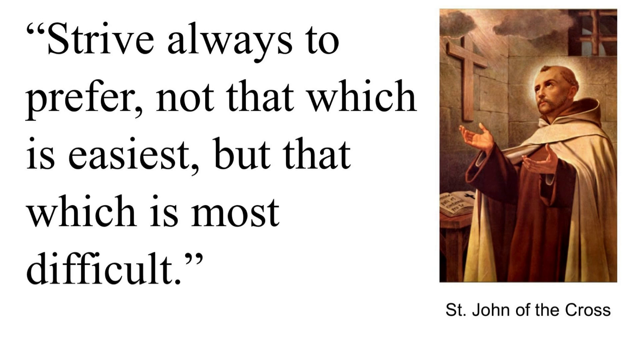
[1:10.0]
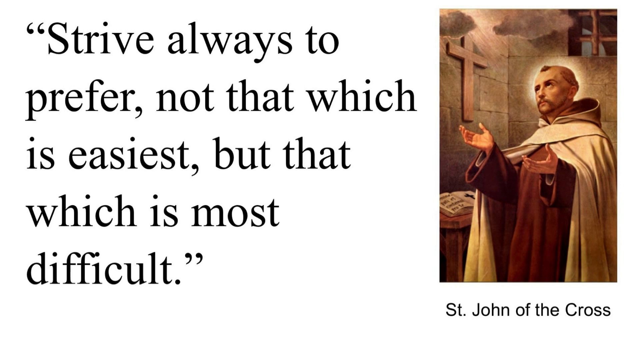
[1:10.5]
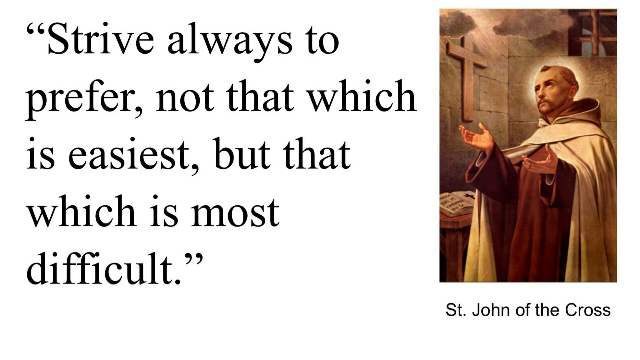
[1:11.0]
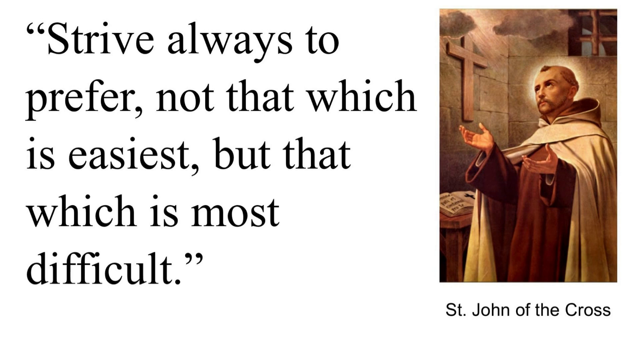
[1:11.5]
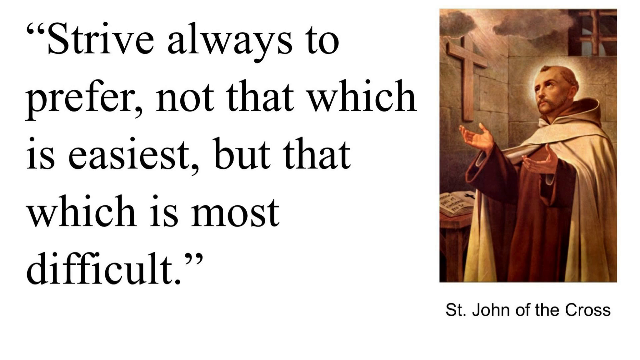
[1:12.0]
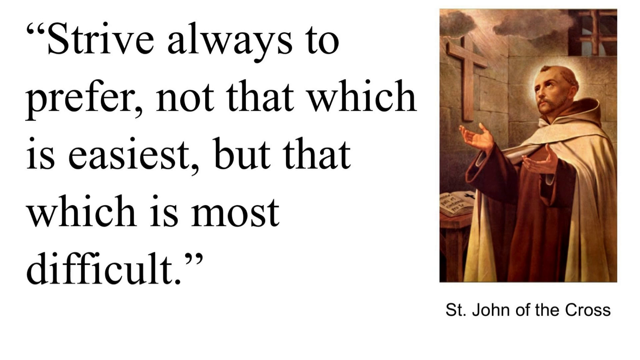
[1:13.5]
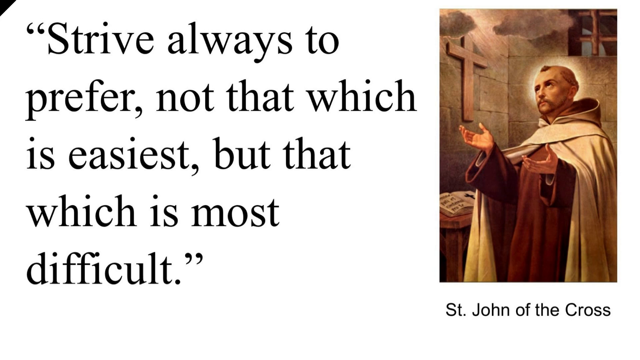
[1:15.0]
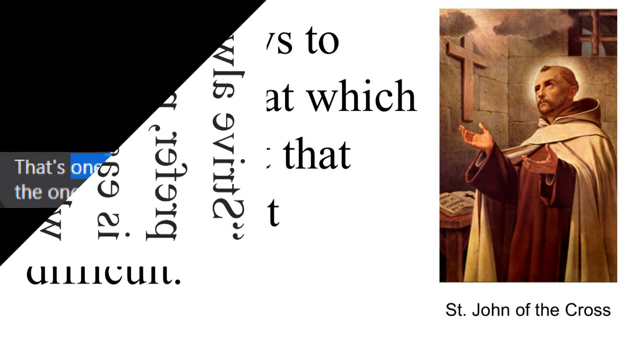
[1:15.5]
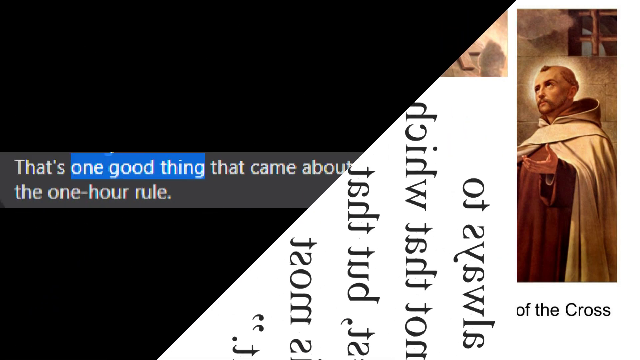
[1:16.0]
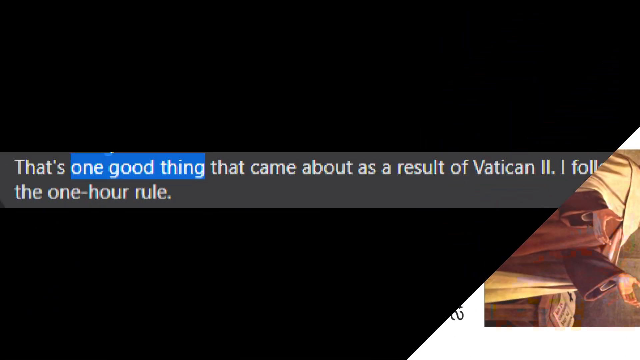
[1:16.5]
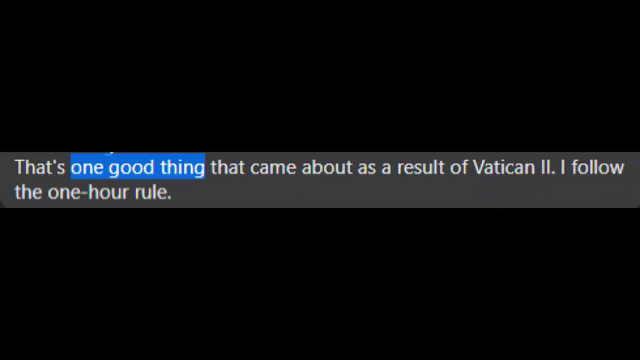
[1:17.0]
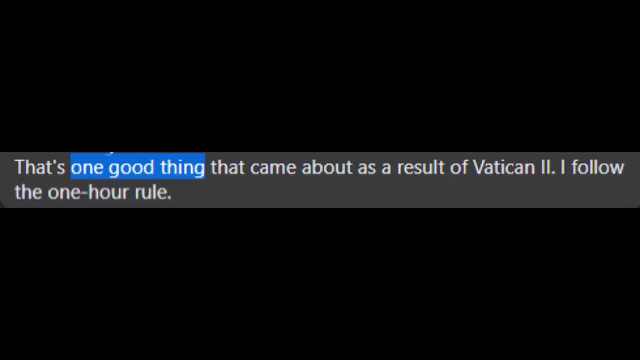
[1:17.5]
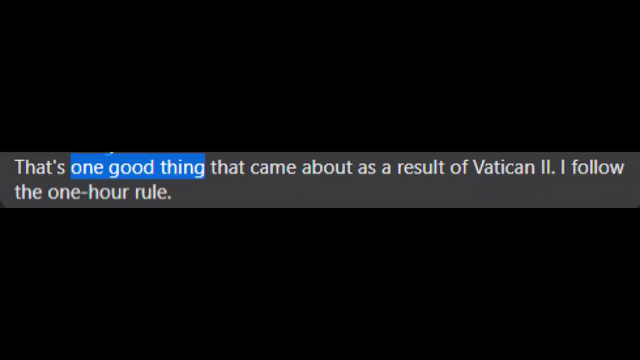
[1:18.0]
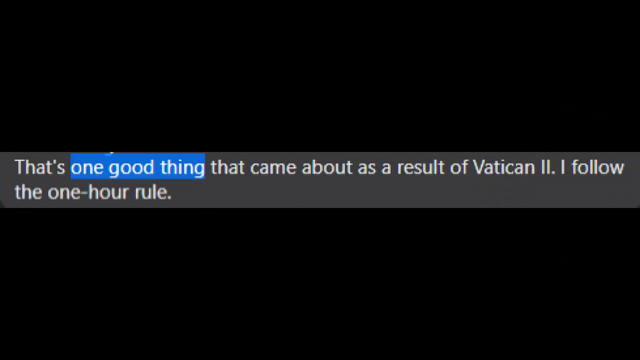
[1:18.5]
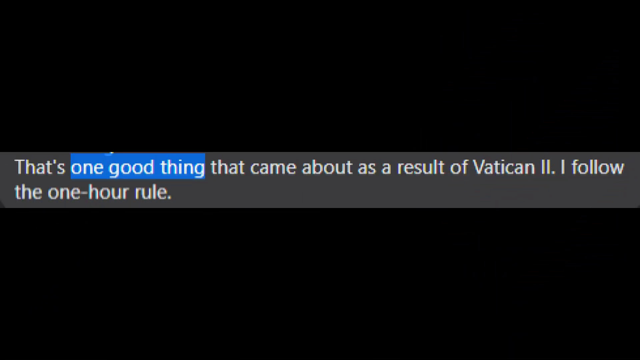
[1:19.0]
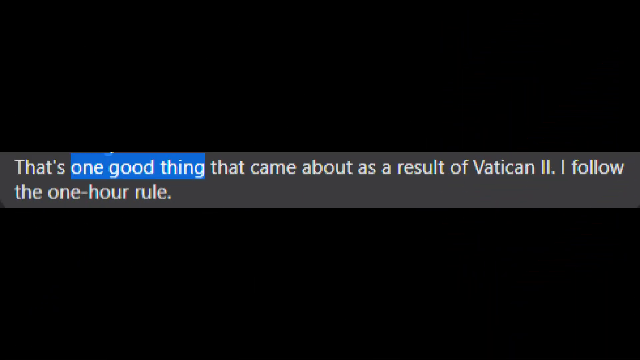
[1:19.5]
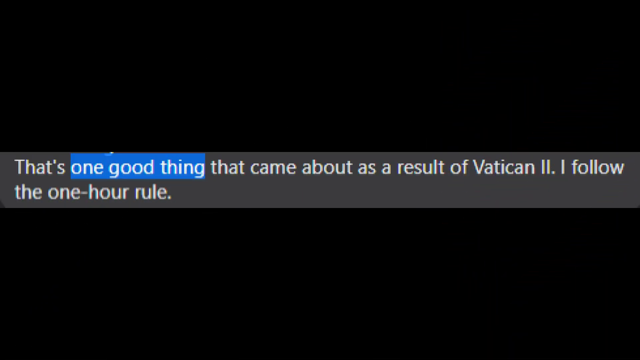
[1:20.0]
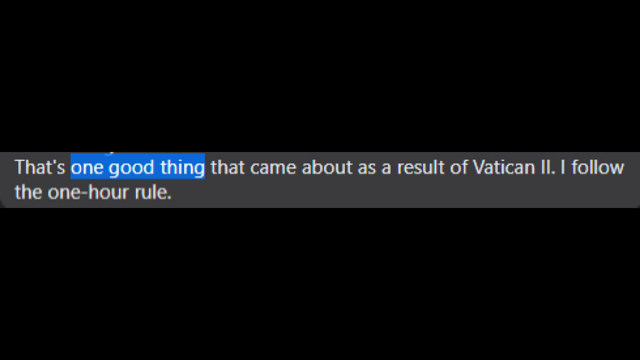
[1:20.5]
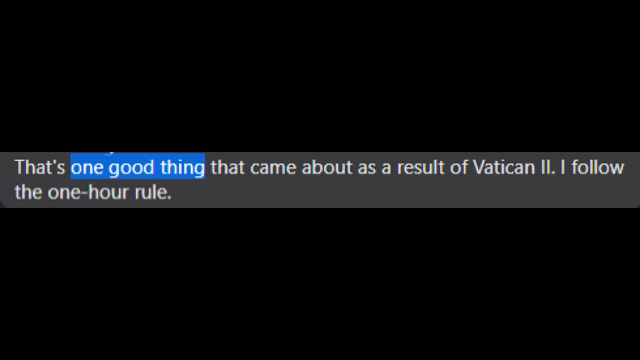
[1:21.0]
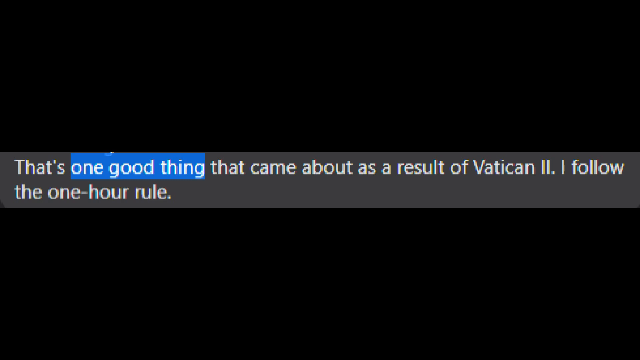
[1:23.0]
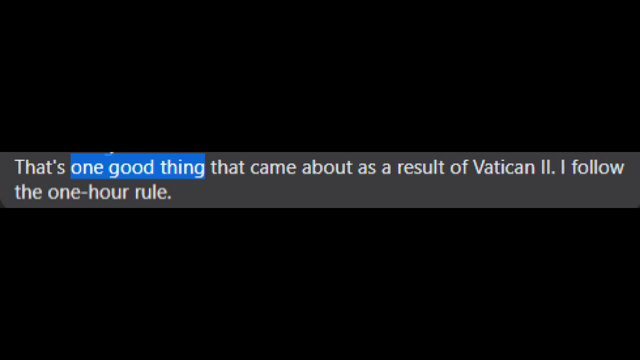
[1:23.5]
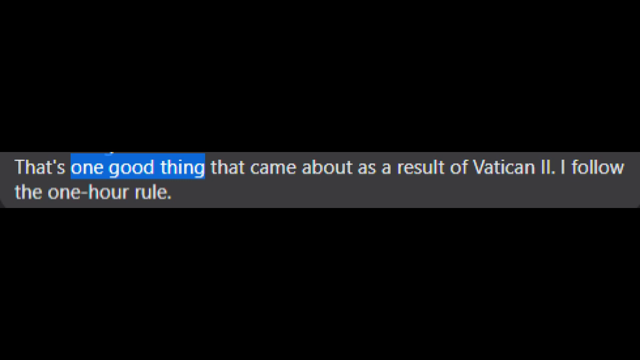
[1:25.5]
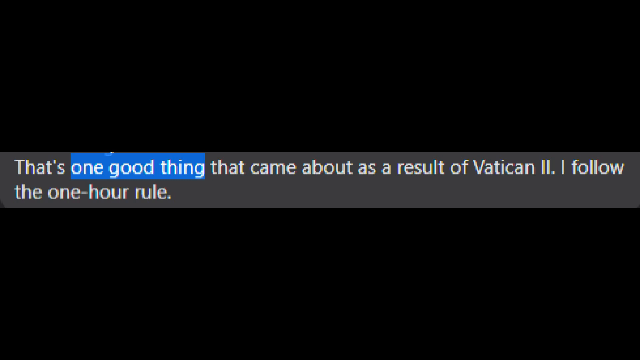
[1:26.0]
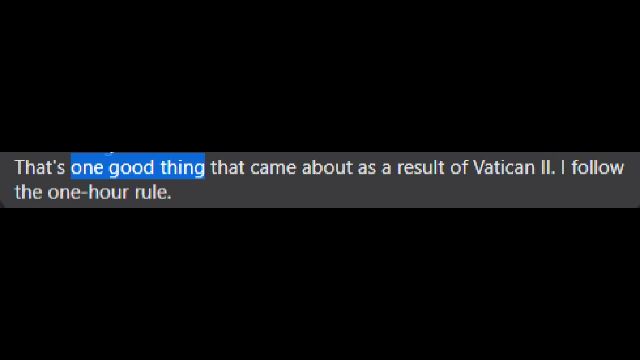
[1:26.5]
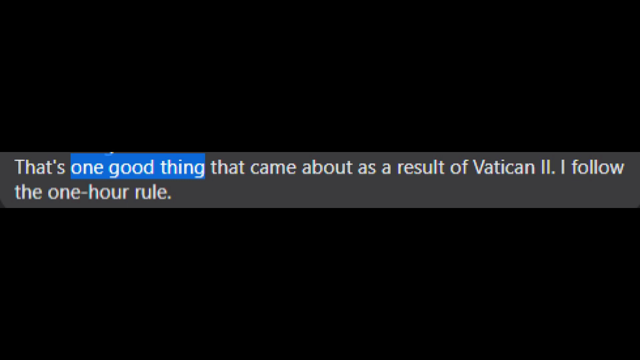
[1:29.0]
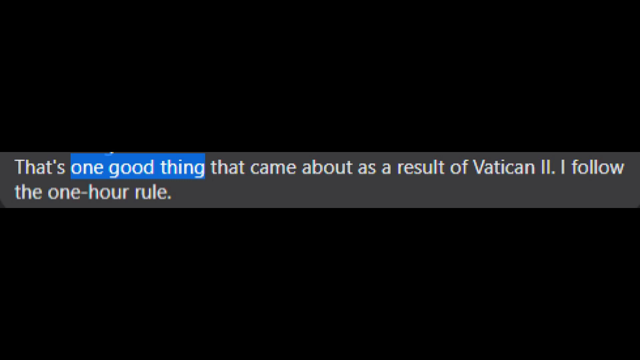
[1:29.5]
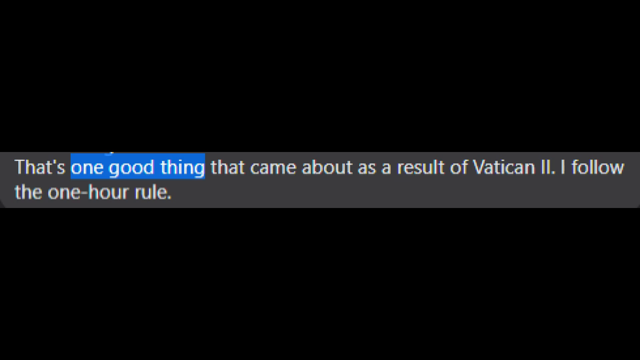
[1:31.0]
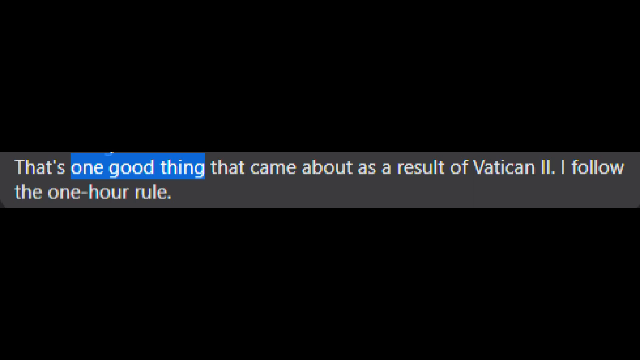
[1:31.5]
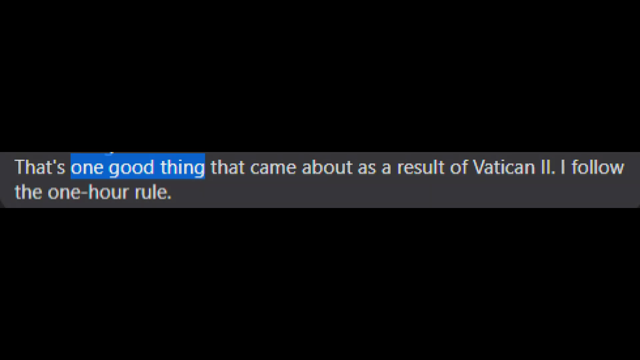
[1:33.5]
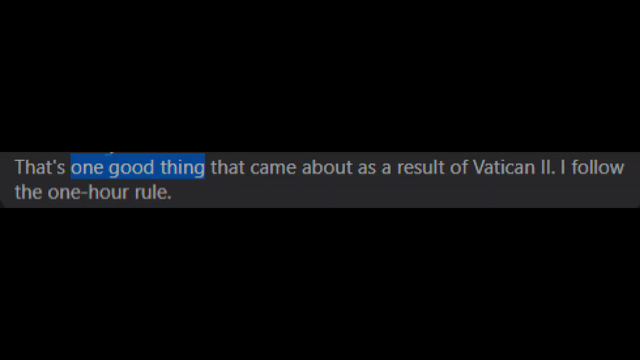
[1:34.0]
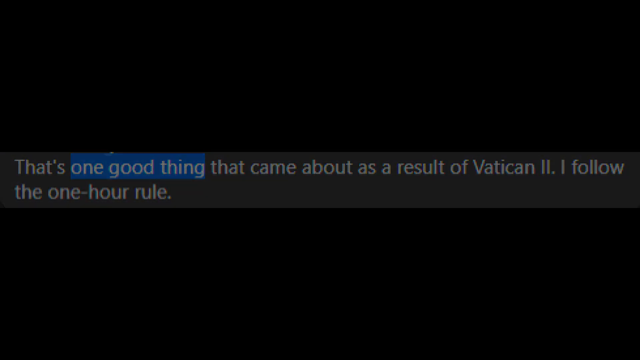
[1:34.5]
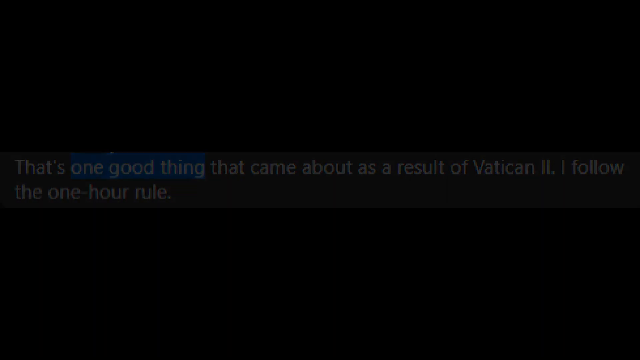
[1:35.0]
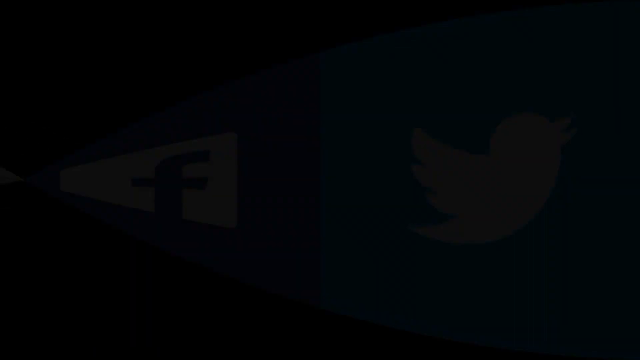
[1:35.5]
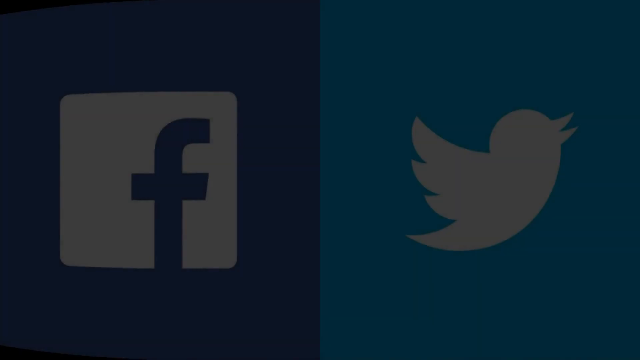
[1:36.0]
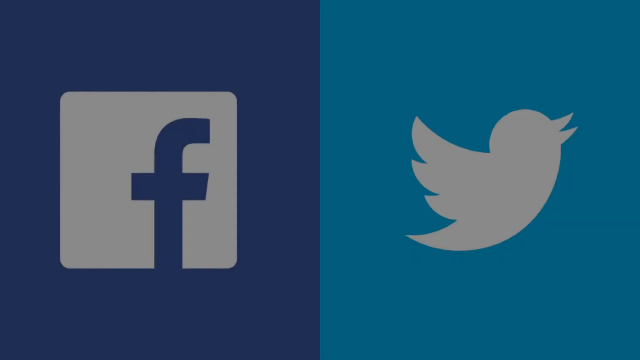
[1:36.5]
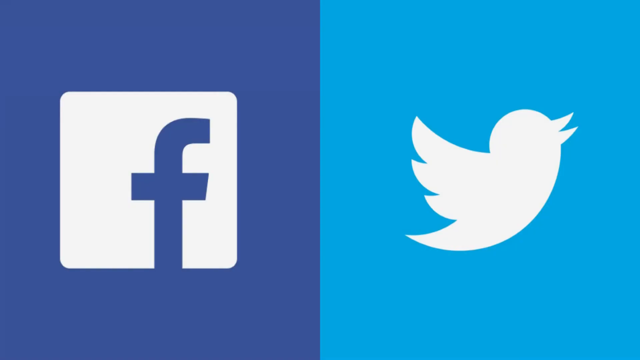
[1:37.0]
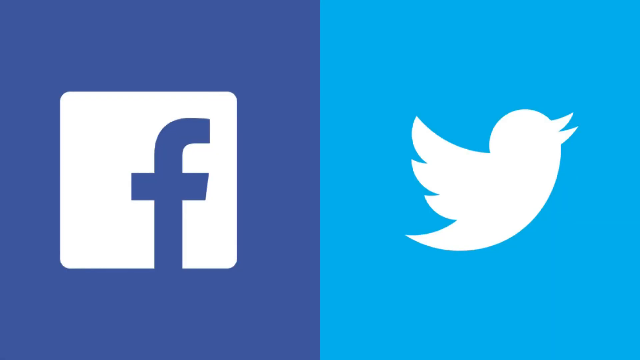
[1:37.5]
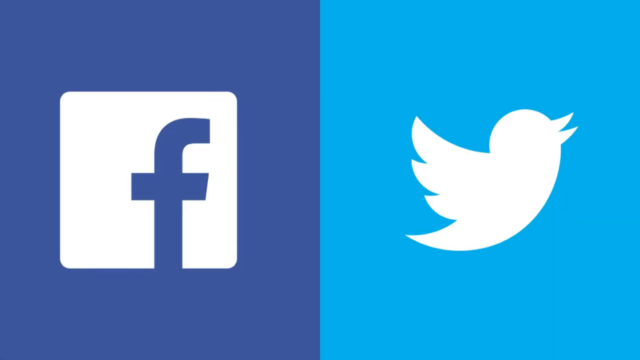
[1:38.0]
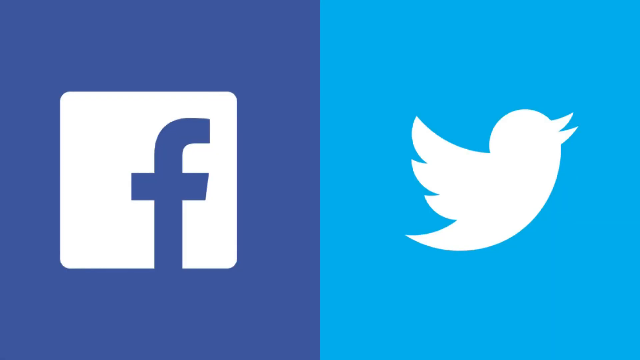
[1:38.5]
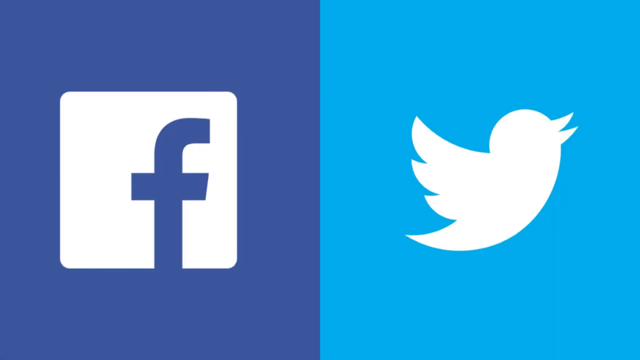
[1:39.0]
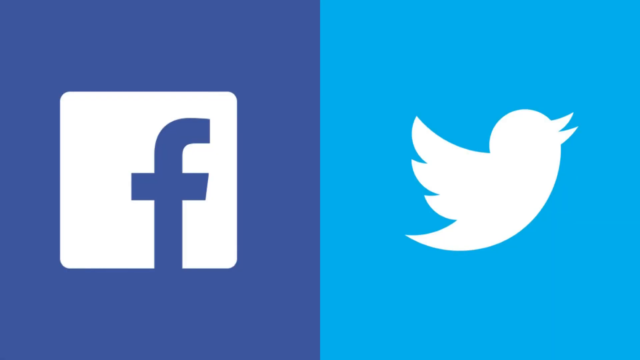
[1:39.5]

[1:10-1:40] A cartoonish image shows a man in a brown robe with another robe with a hood over it, and light shining down on his face. A caption includes the words "who prefer not that which is easiest but which is most difficult" and stays on screen. Other text then appears: "that's one good thing that came about as a result of Vatican II I follow the one-hour rule". The video stays on this page for a while without much movement, then fades out to a page with Twitter and Facebook icons. The man in the cartoon image appears to be Saint John of Cross. In the picture there is a cross in the background and what looks like a Bible on the table, and he looks like he may be in some type of church or place of prayer.